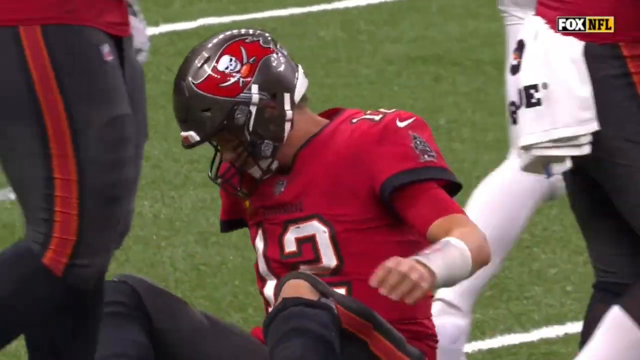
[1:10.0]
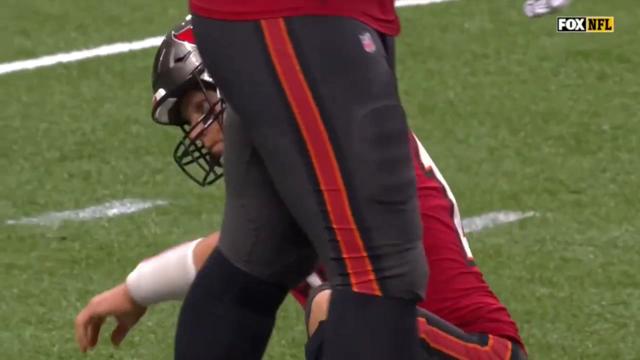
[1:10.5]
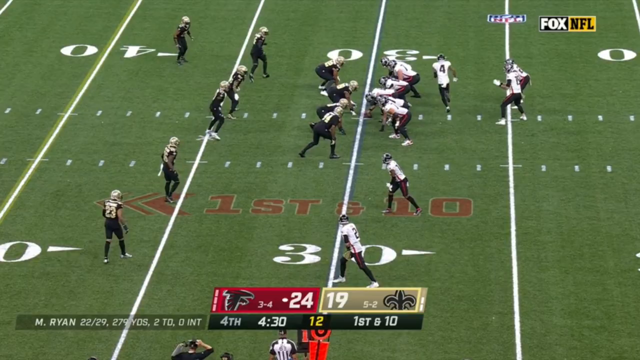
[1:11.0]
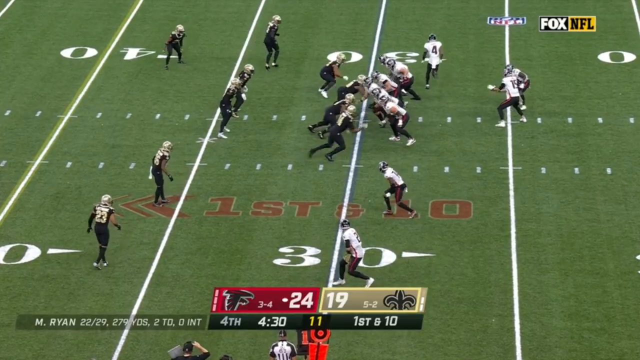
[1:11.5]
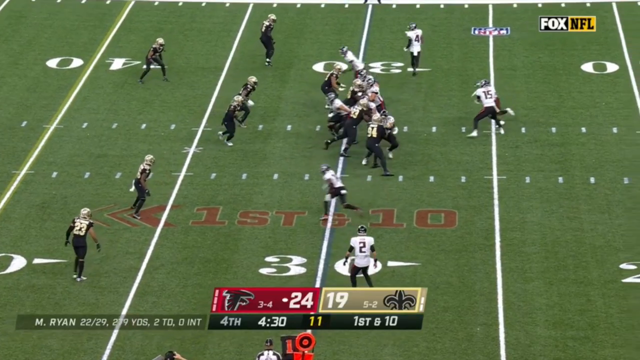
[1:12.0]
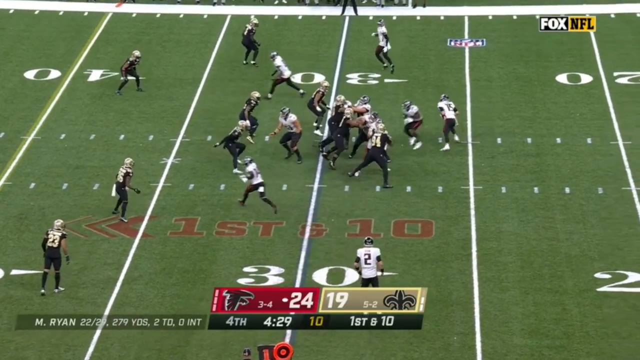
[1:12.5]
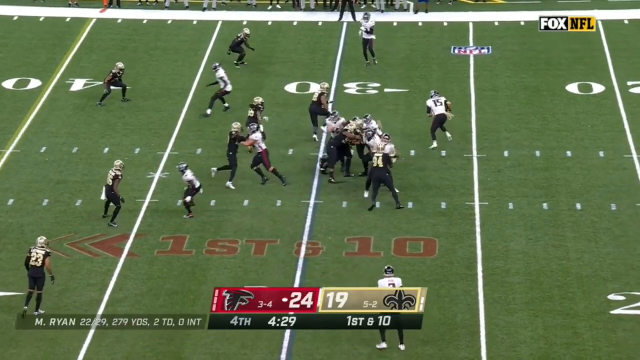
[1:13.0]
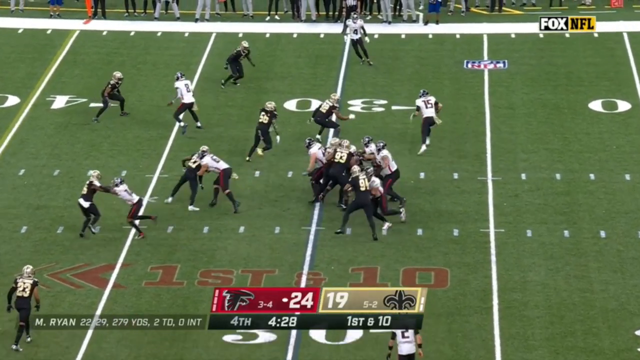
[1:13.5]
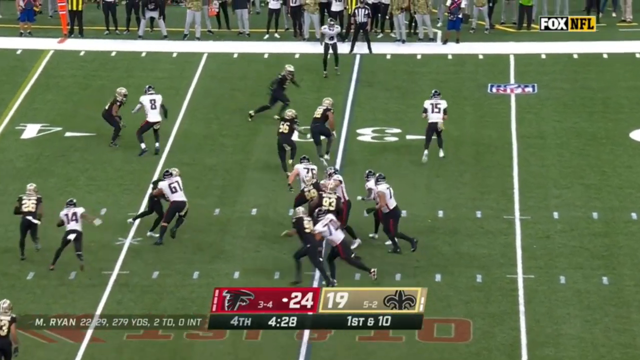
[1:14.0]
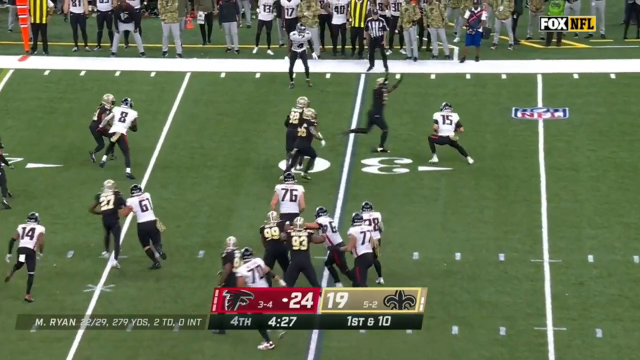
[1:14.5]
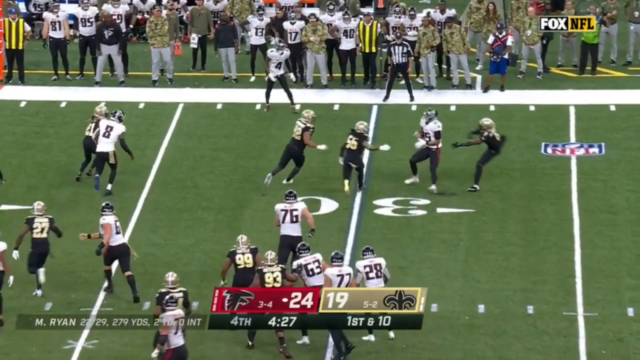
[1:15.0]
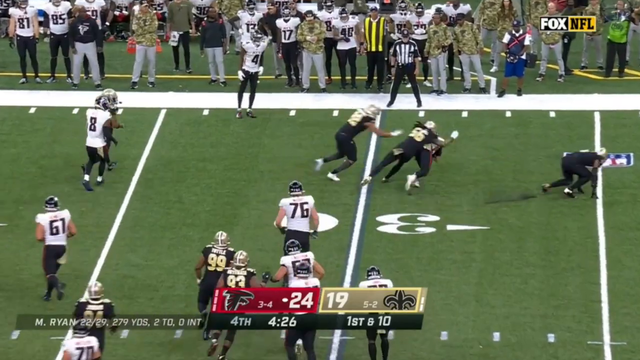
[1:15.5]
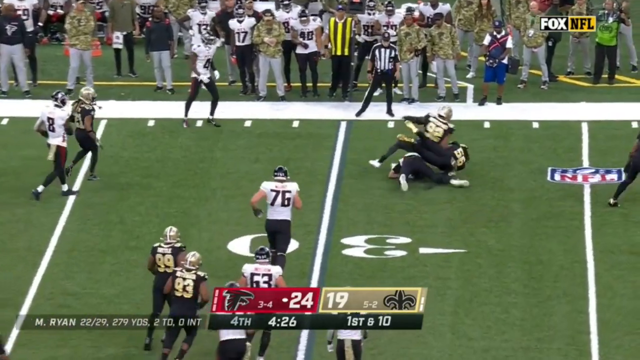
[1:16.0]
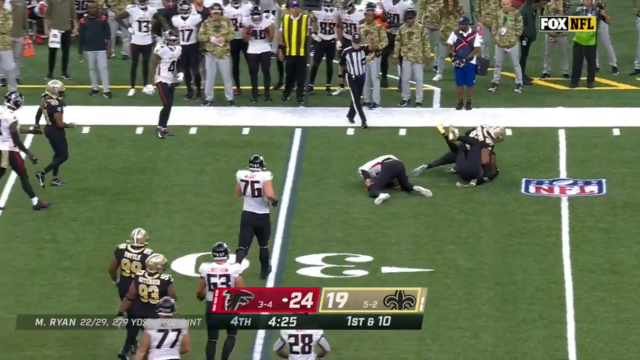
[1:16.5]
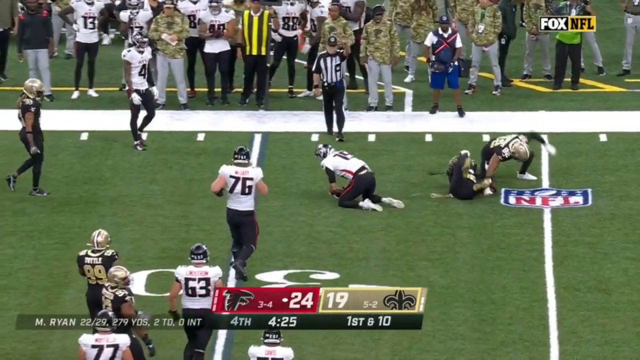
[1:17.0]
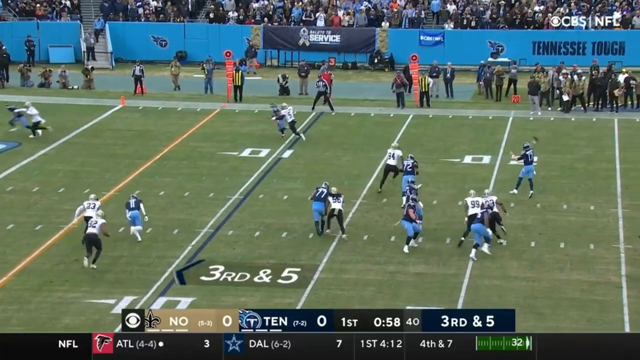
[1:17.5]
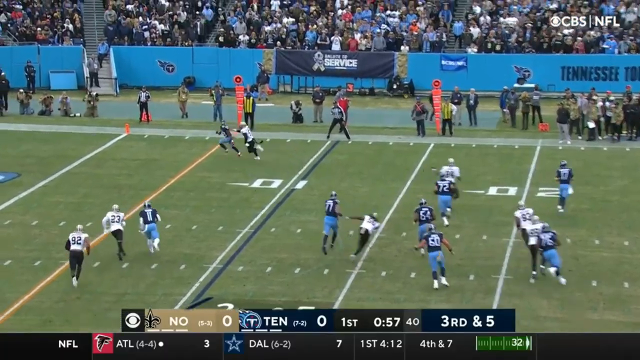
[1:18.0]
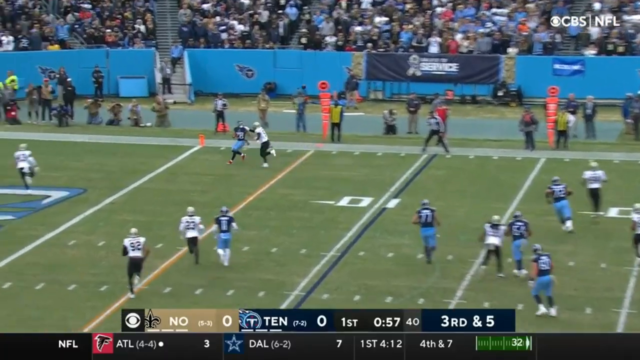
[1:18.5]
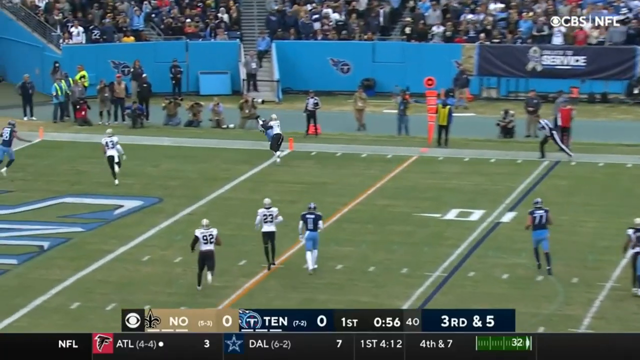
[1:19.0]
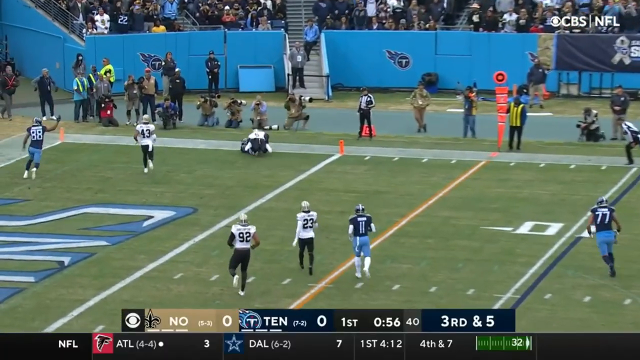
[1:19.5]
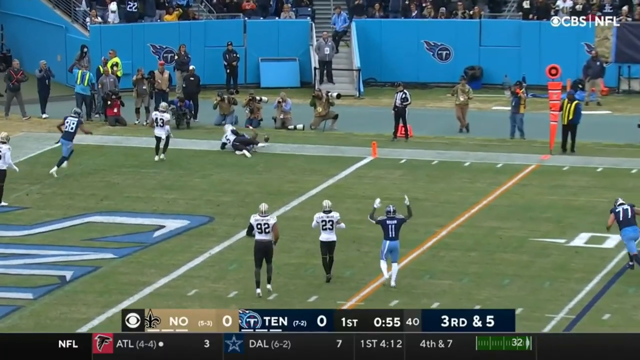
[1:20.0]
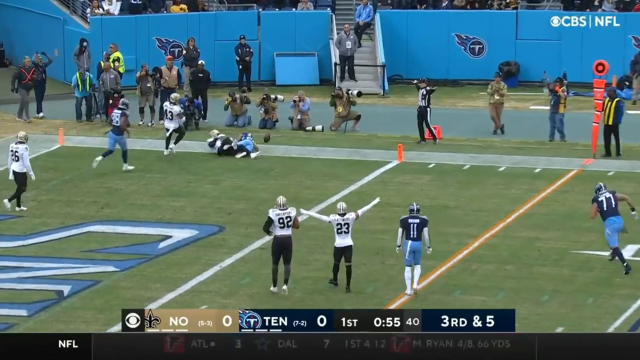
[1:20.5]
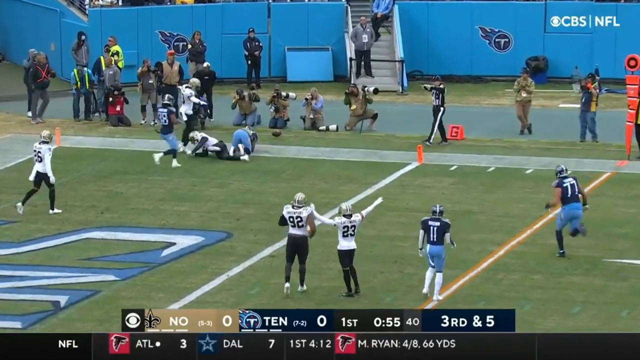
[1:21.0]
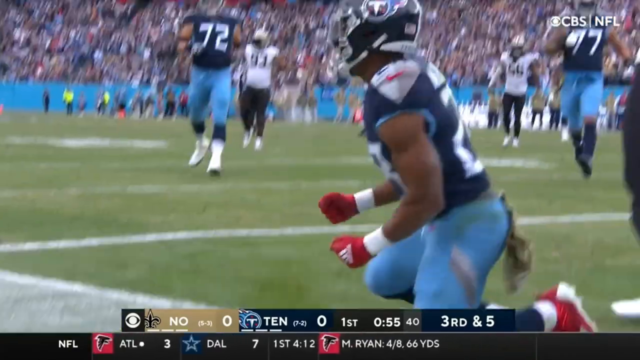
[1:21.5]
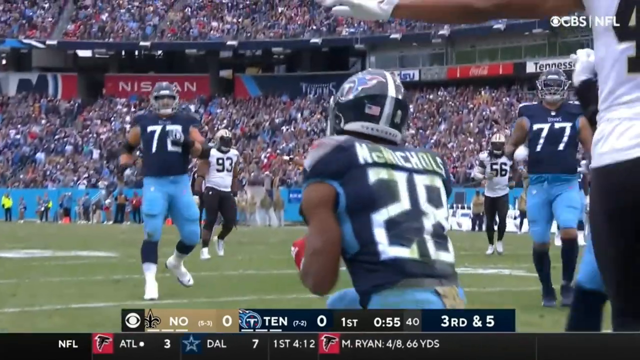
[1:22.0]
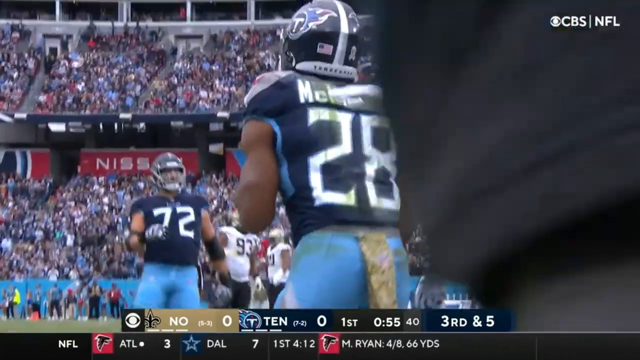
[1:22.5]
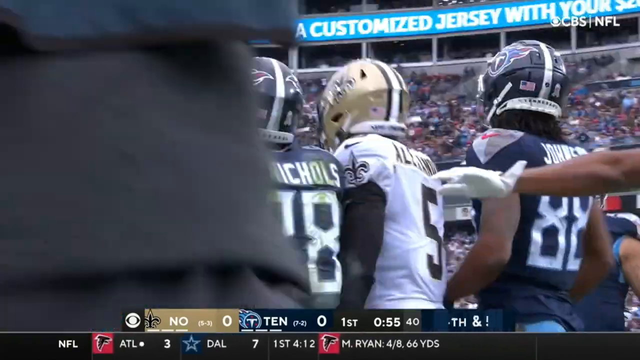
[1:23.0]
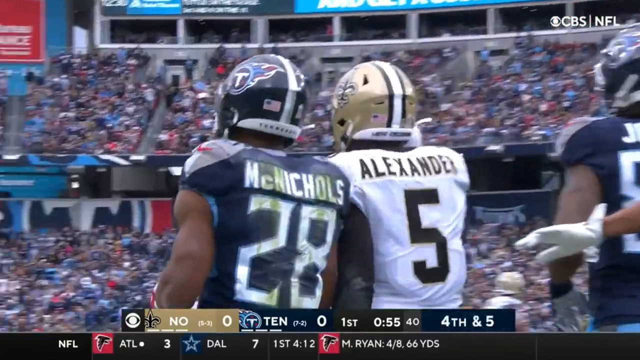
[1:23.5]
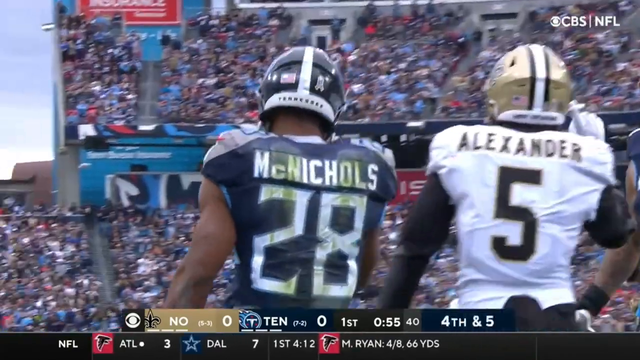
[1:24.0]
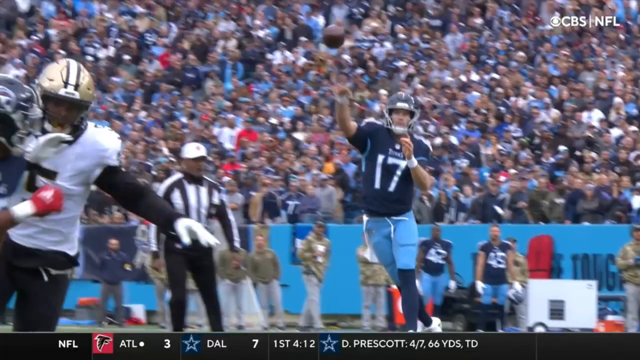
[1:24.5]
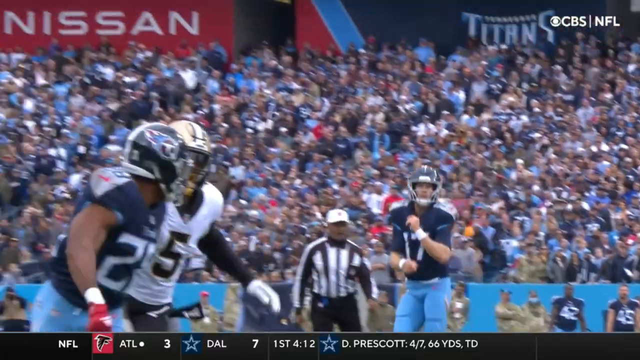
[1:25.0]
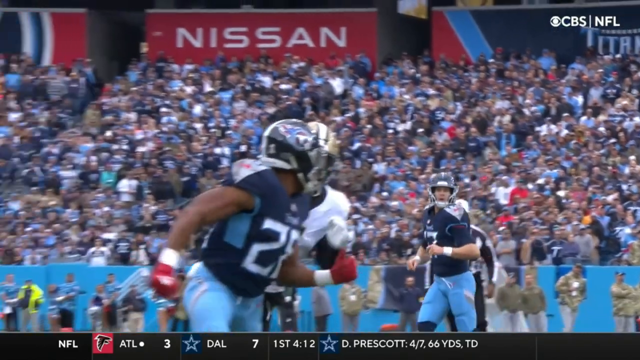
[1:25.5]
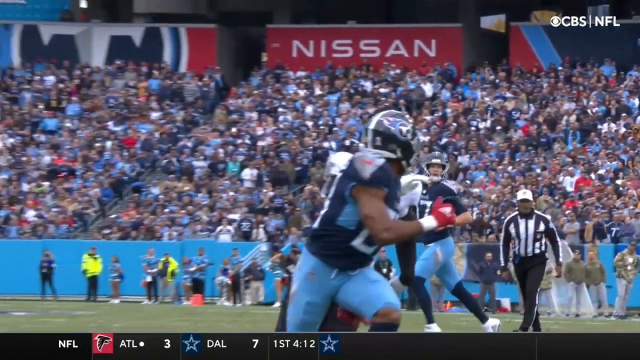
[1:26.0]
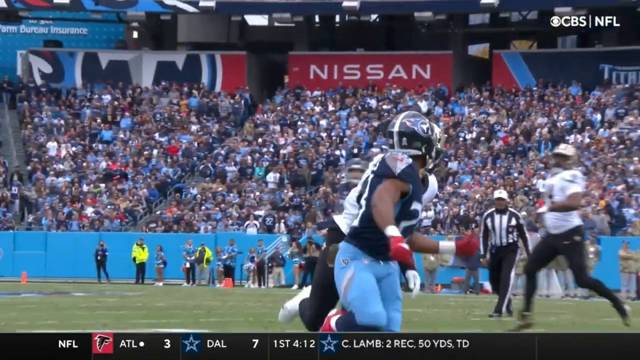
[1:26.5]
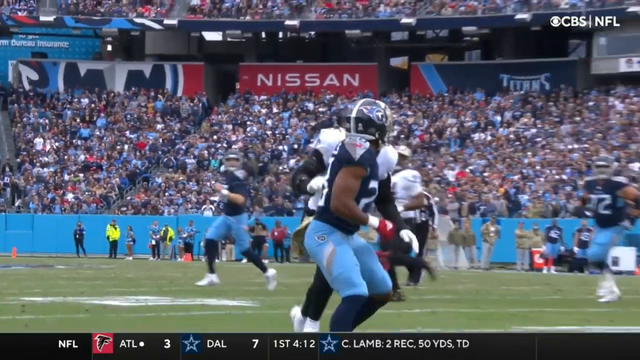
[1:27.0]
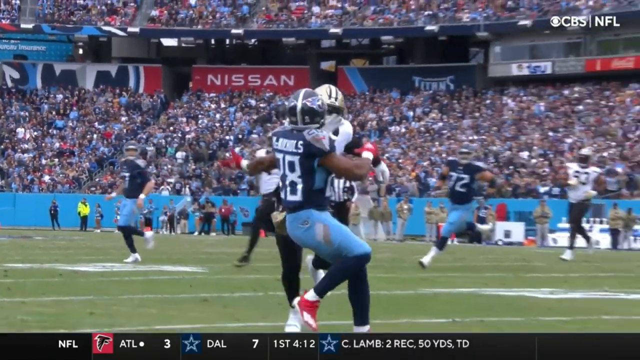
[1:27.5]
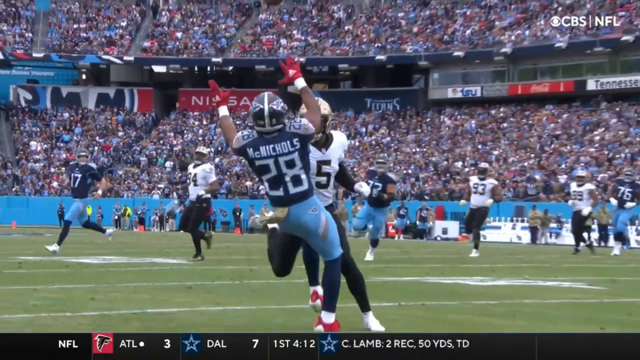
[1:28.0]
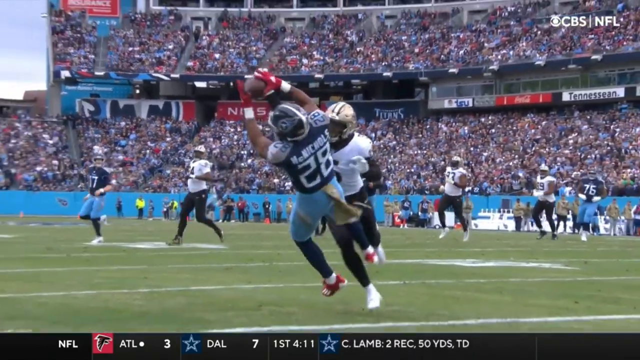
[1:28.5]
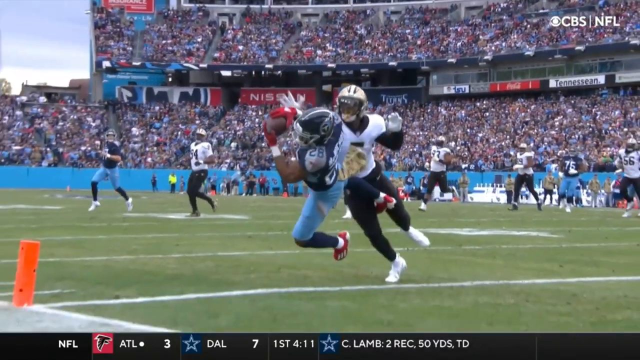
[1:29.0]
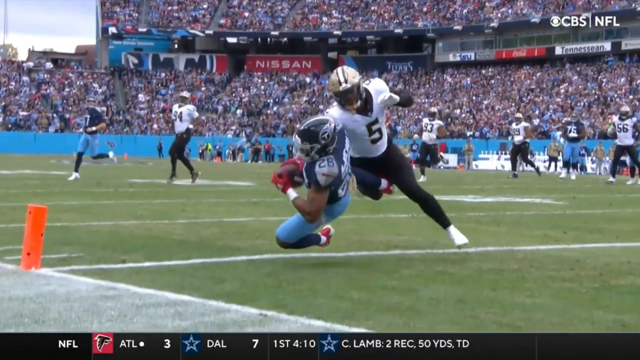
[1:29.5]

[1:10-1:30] The New Orleans Saints defensive highlight compilation continues on Fox NFL, with Tom Brady getting up to his feet after being stopped. Next comes a game against the Falcons: the score is 24 to 19, with the Falcons up five in the fourth quarter, at first and ten. Kirk Cousins tries a fake handoff, then tries to run to the side and gets tackled. Then the Saints play the Tennessee Titans with 58 seconds left in the first quarter, at 0-0 and third and five. The Titans go for a touchdown pass to Michael Nicholas, number 28, from a quarterback who might be Mason Rudolph, but the Saints defense blocks it: the receiver looks like he catches it, but Alexander knocks it out of his hands.